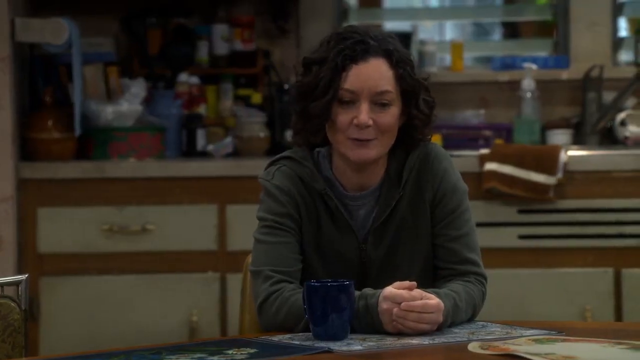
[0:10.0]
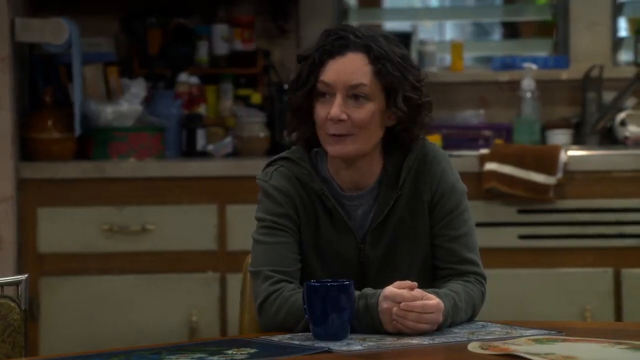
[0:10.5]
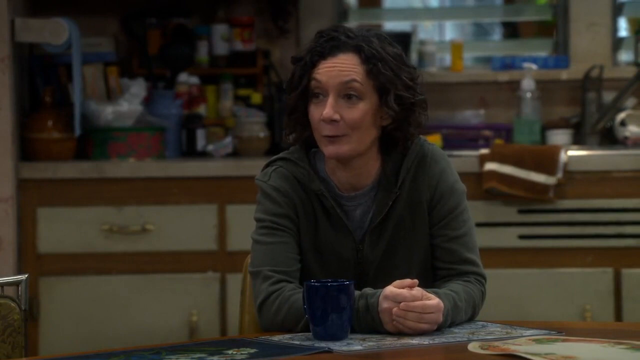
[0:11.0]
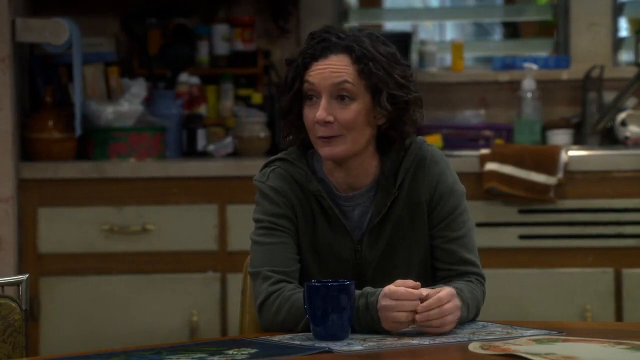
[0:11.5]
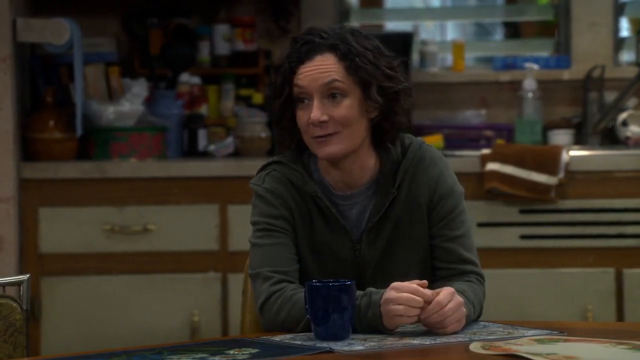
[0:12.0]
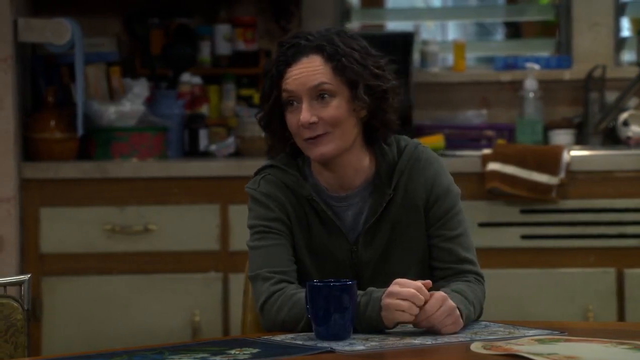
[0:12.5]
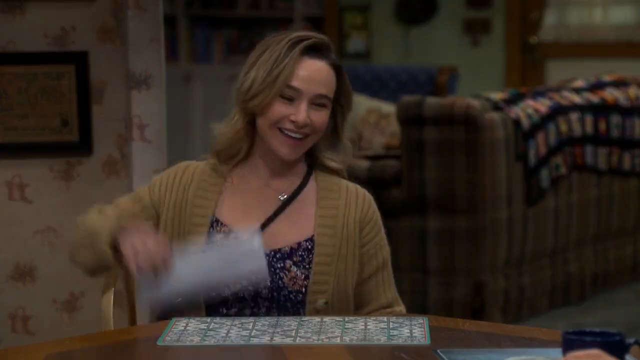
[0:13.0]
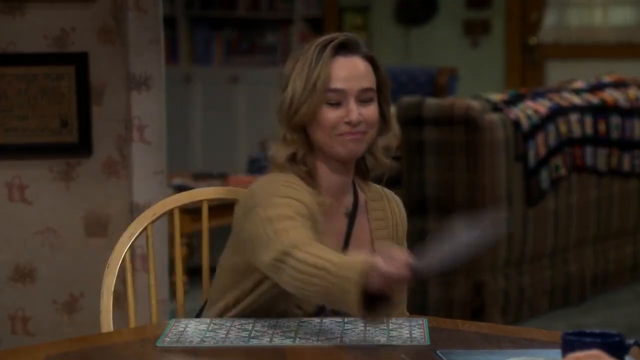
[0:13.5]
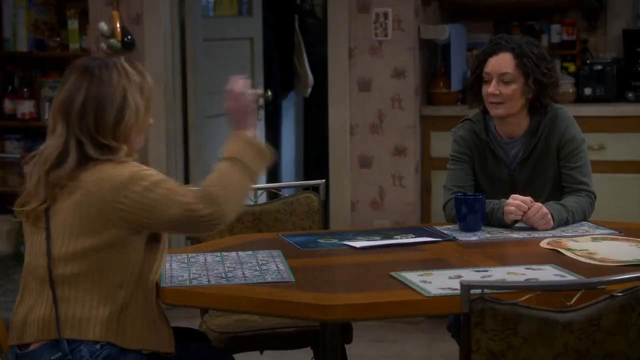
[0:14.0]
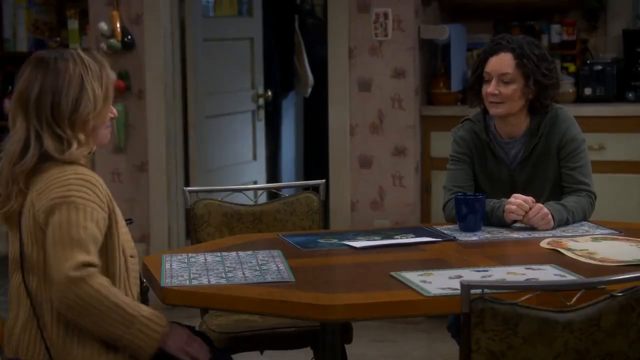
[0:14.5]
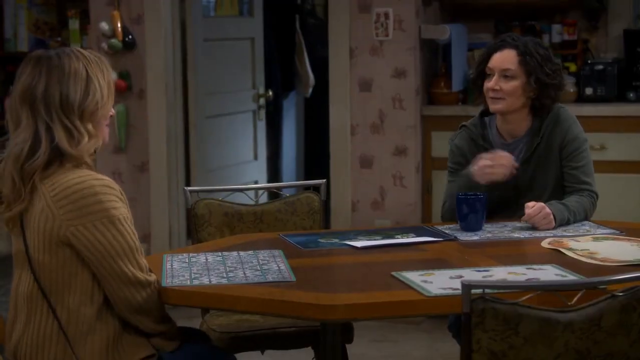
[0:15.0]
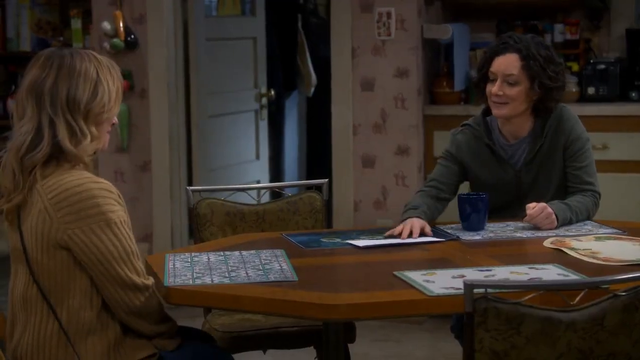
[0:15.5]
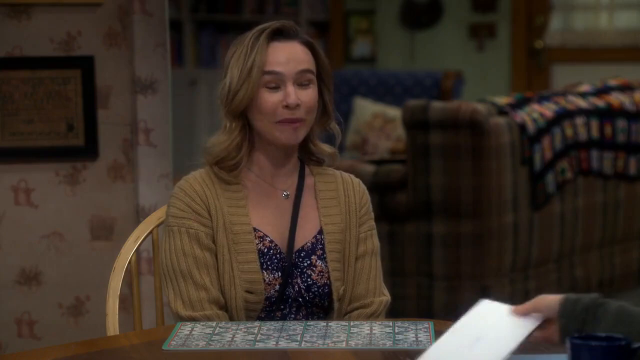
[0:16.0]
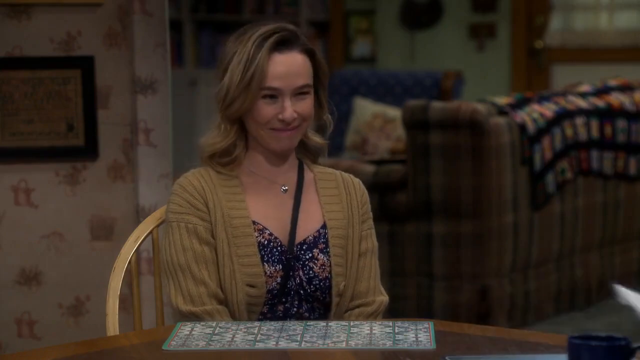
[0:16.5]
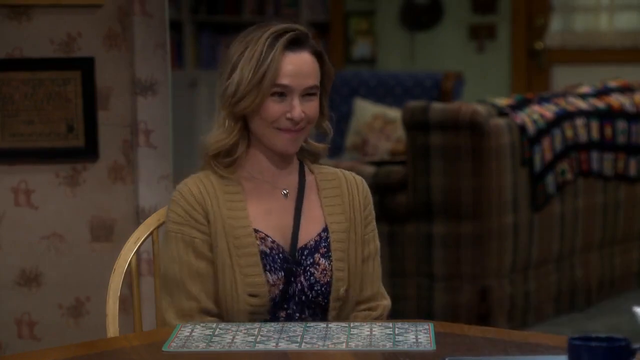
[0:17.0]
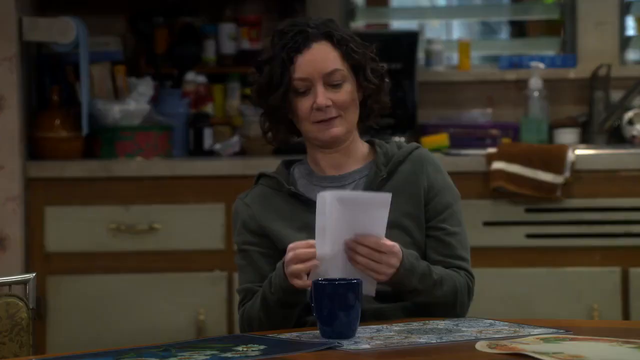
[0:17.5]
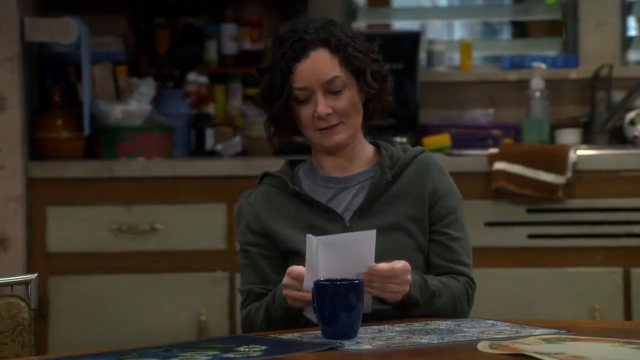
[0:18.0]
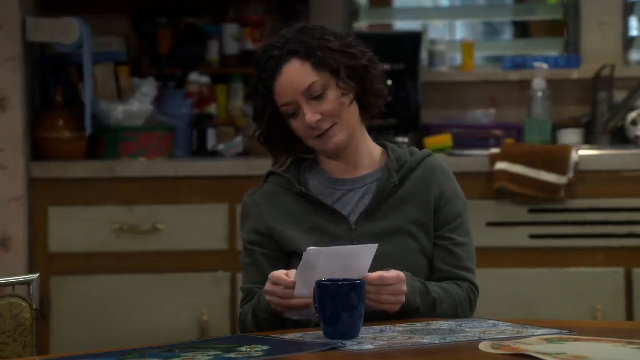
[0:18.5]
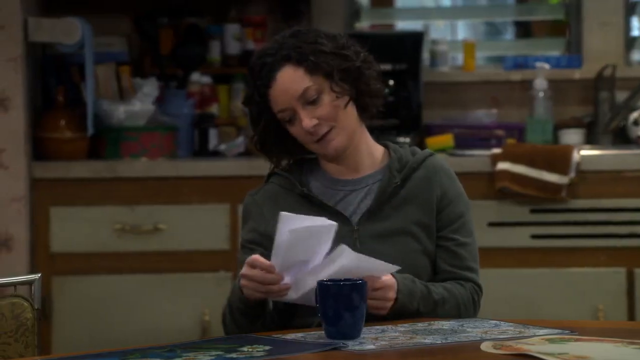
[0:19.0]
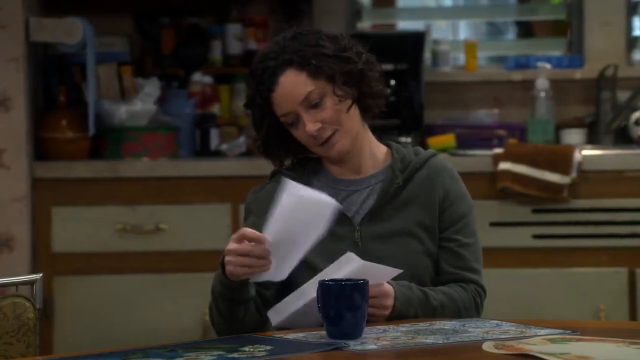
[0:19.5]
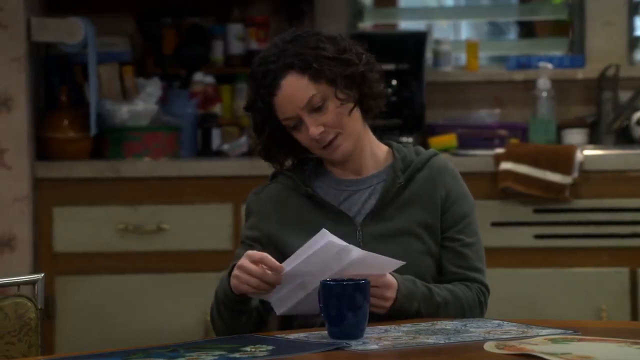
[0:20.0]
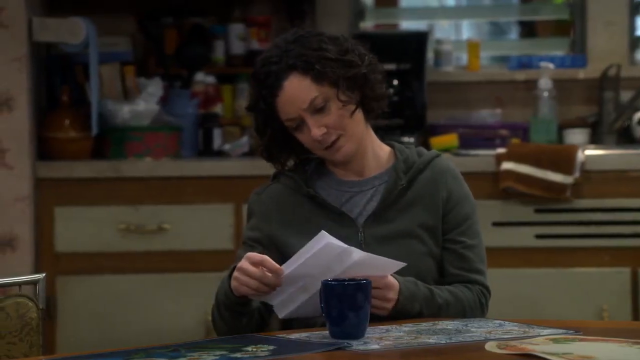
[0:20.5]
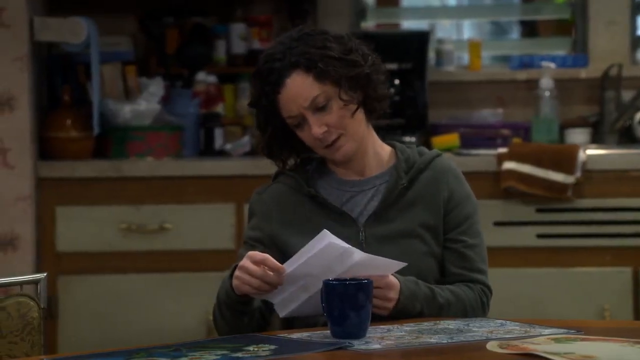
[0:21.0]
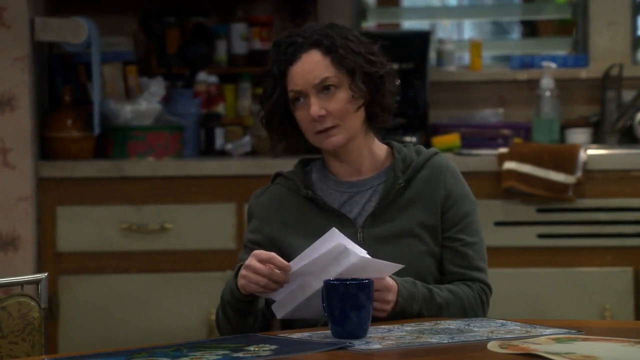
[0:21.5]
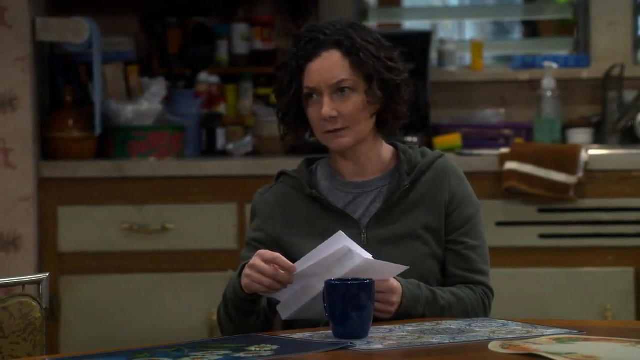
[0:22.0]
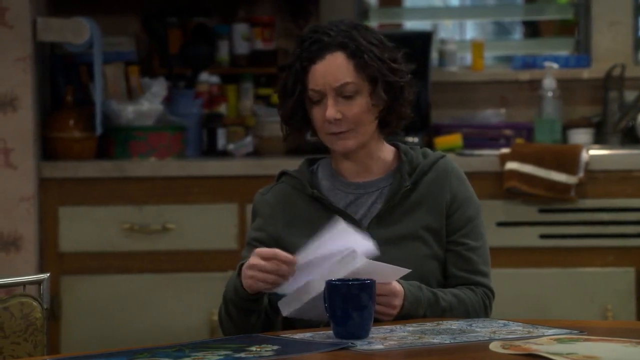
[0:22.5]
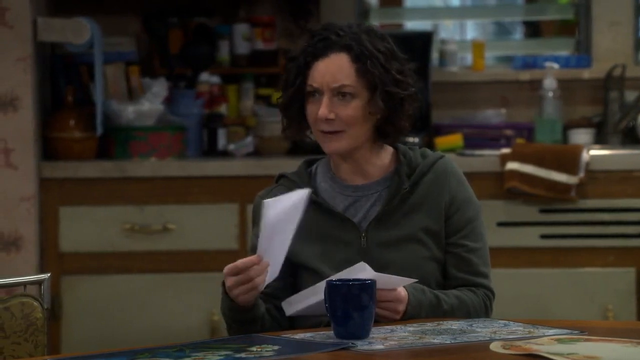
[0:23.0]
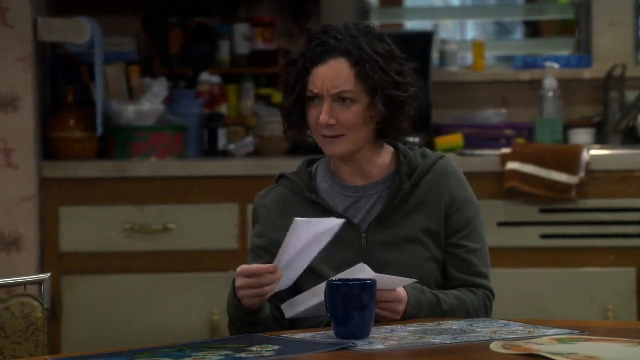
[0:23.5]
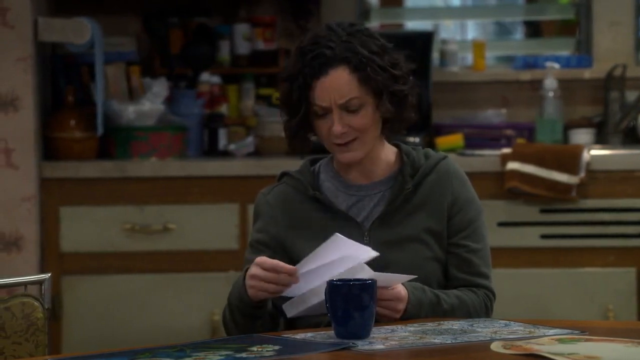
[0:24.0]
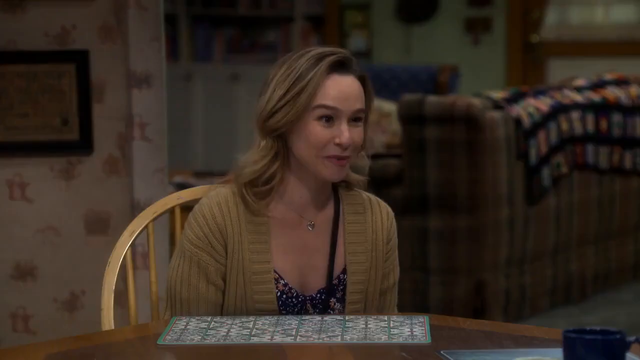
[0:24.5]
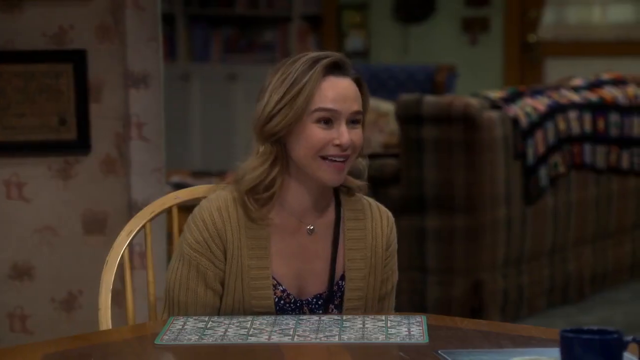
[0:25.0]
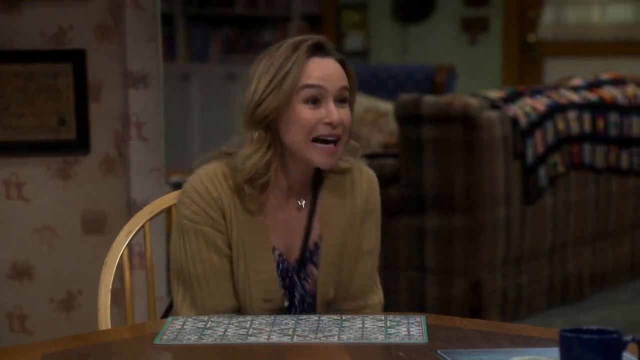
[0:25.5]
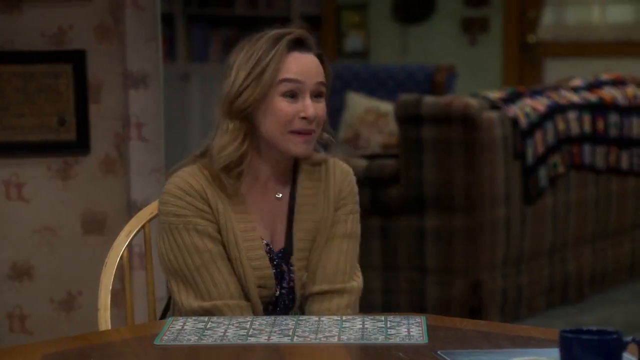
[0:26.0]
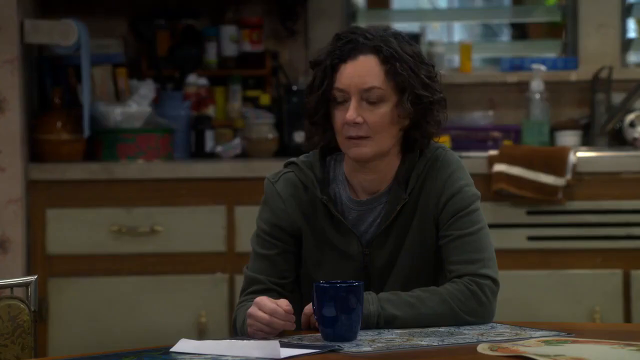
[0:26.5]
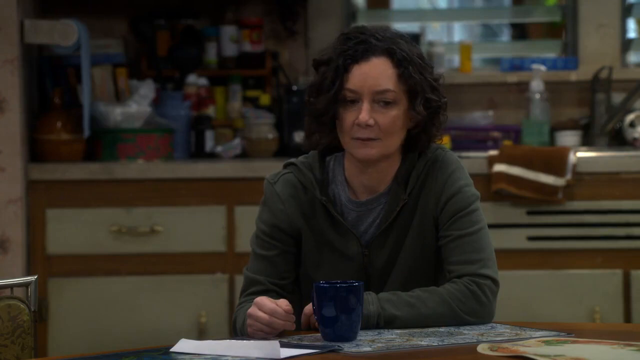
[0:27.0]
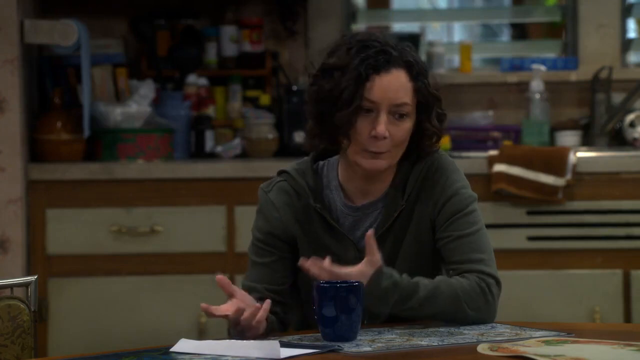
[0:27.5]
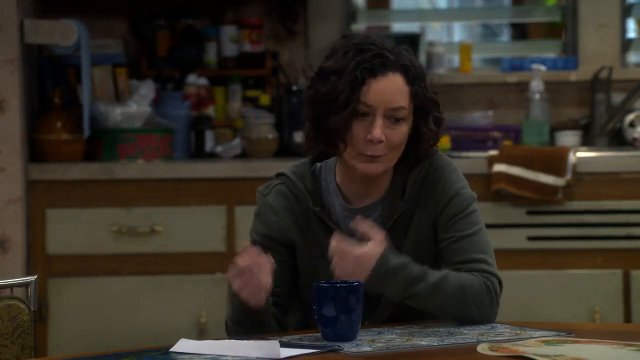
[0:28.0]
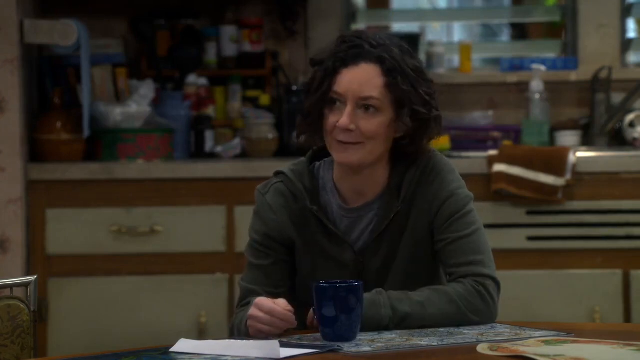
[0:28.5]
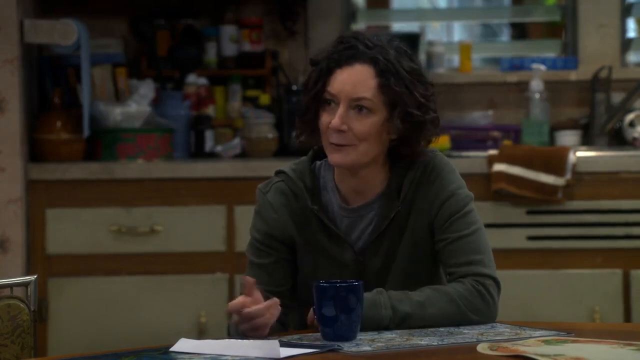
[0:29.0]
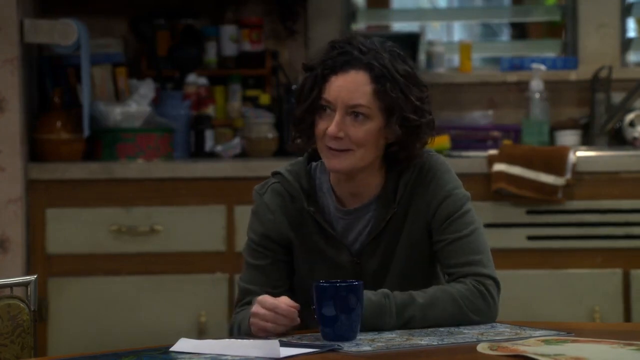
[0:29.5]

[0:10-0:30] The woman in the dark olive t-shirt is seated on a kitchen chair with both hands placed on the kitchen table, smiling as she talks with the woman in the light brown jacket. The woman in the light brown jacket has light brown hair and a messenger bag with a black strap around her neck. She places the envelope on the kitchen table and slides it toward the woman in the dark olive shirt, beside whom there is a black mug. As she passes the envelope, she smiles excitedly and withdraws her hand. The woman in the olive shirt leans forward and grabs the white envelope with both hands, stares at it, and opens it to reveal a letter. She looks at the letter and looks surprised as she talks with the woman in the light brown jacket. The woman in the light brown jacket seems excited, squeezing her body in excitement as she addresses the woman in the dark olive shirt. The woman in the dark olive shirt holds both hands open in a gesture of confusion as she continues talking.